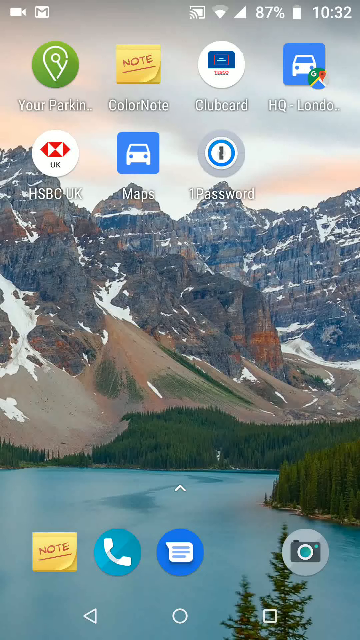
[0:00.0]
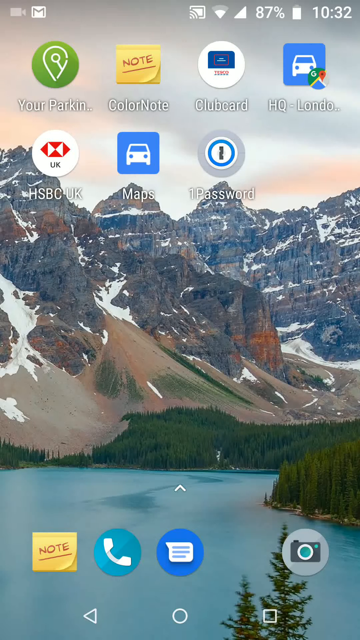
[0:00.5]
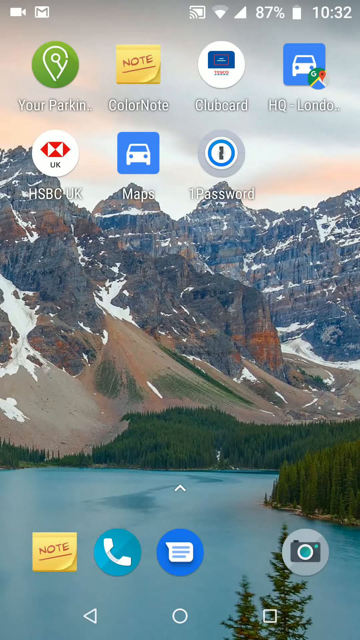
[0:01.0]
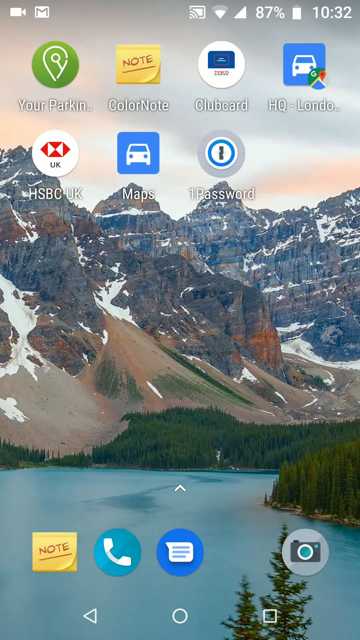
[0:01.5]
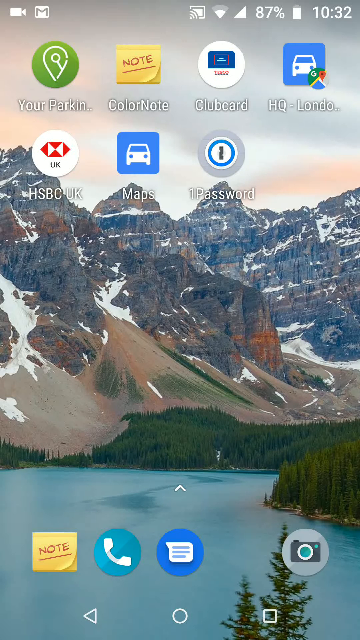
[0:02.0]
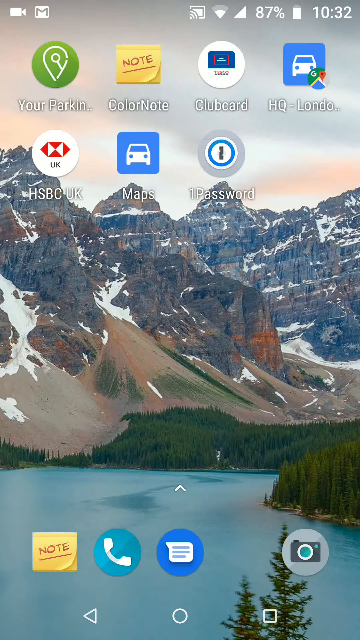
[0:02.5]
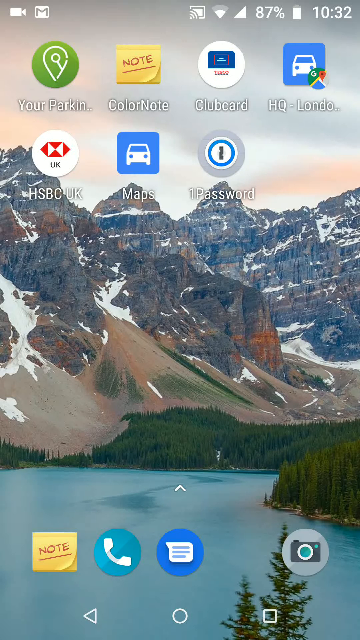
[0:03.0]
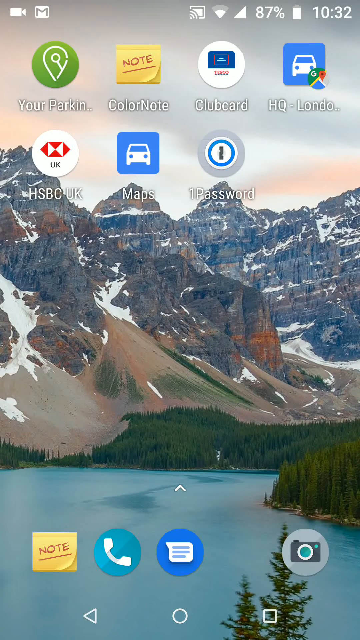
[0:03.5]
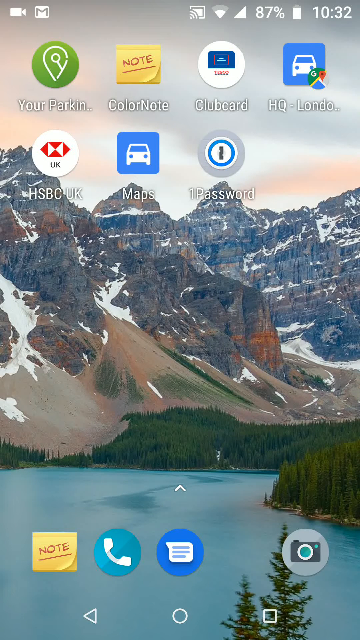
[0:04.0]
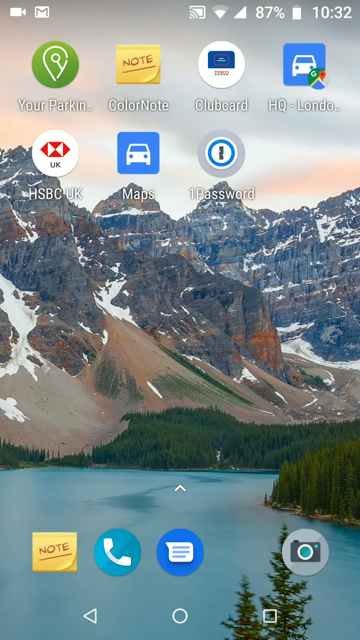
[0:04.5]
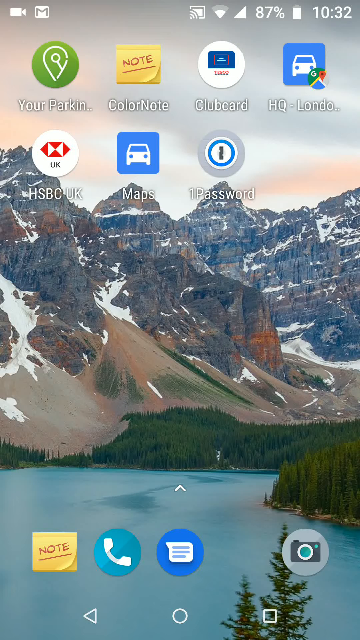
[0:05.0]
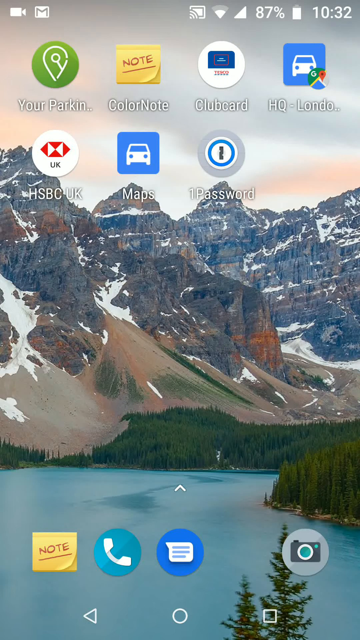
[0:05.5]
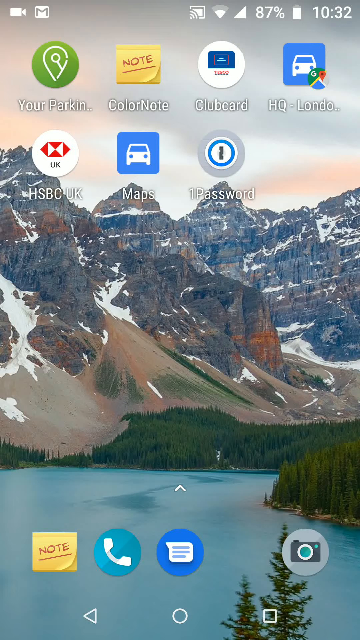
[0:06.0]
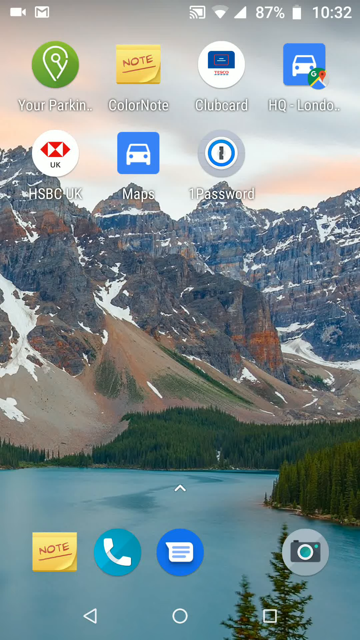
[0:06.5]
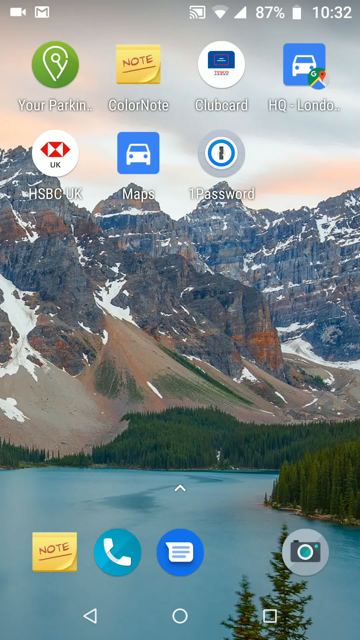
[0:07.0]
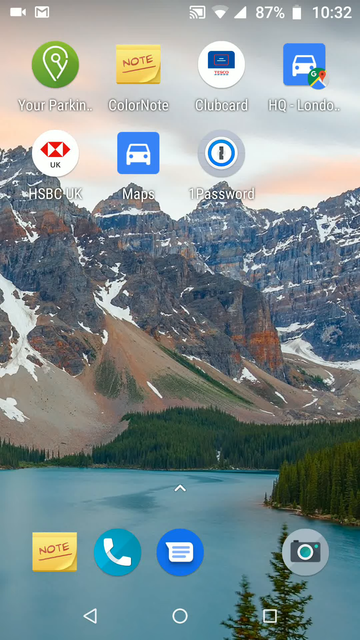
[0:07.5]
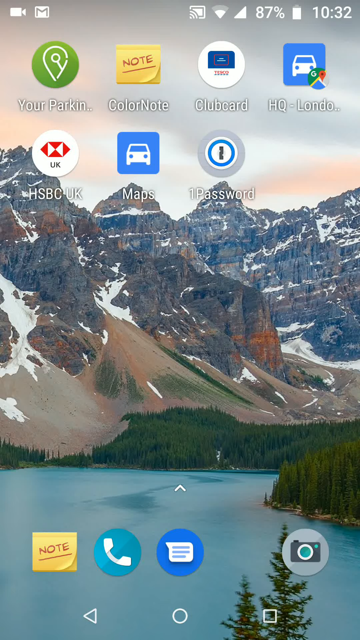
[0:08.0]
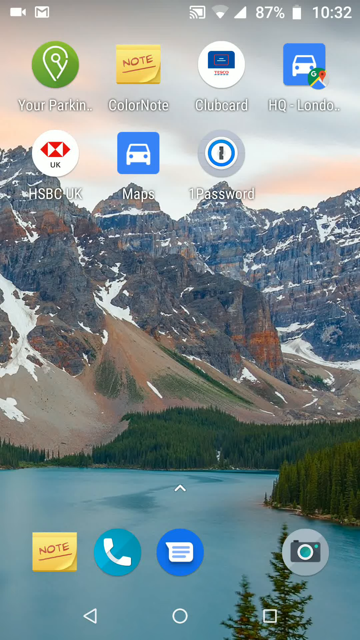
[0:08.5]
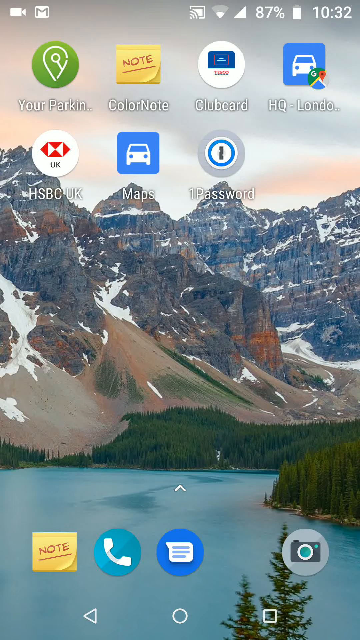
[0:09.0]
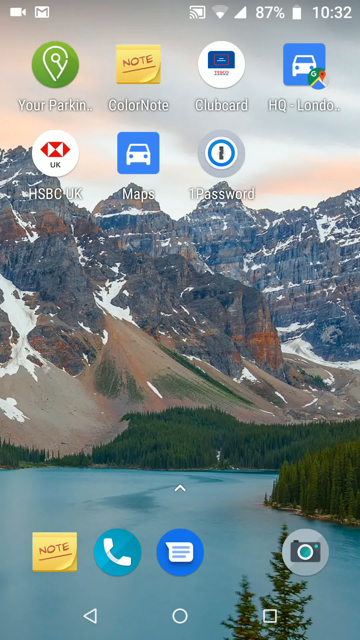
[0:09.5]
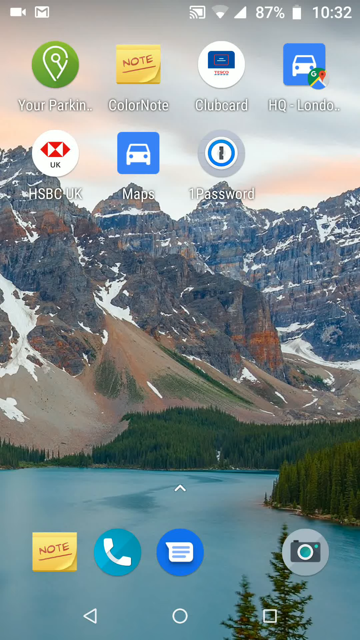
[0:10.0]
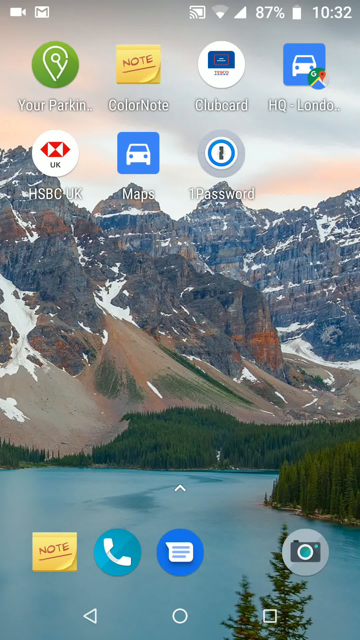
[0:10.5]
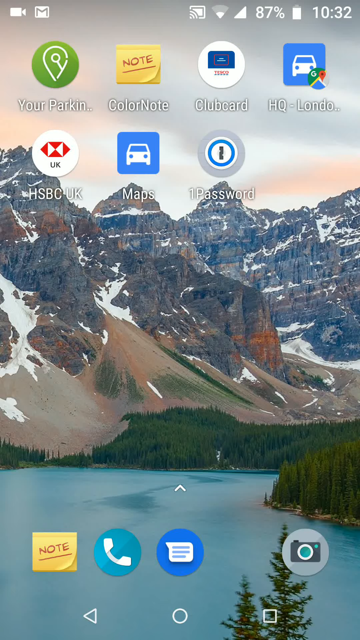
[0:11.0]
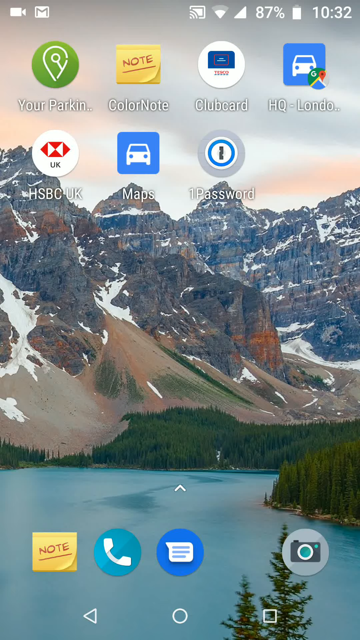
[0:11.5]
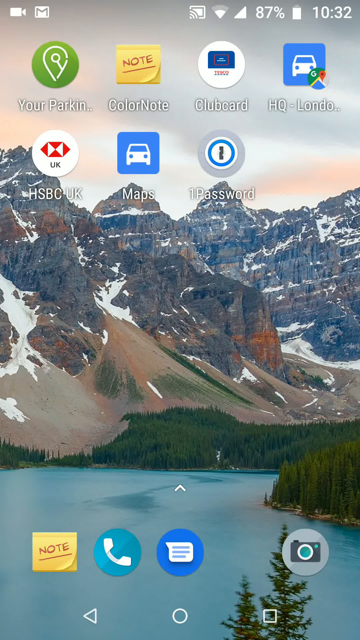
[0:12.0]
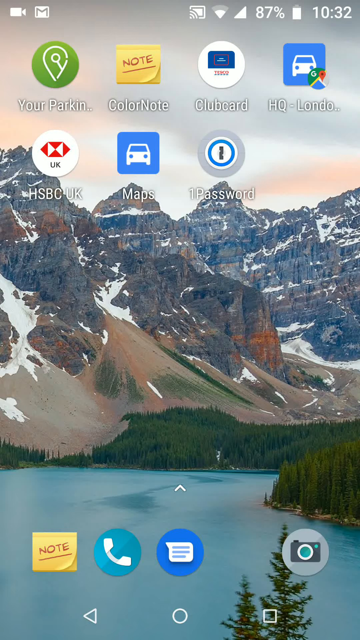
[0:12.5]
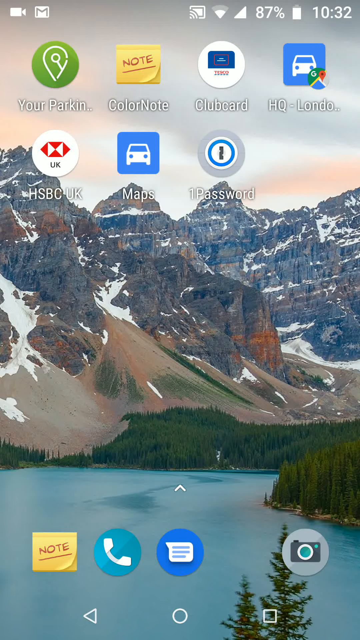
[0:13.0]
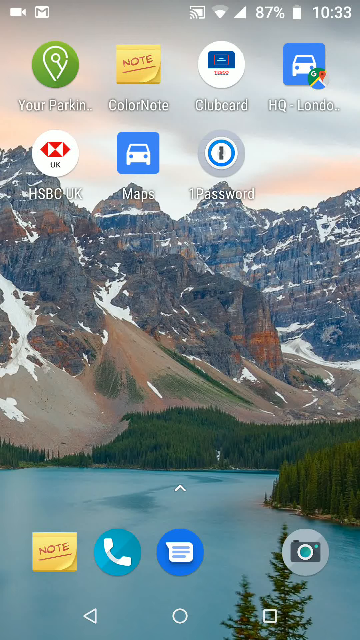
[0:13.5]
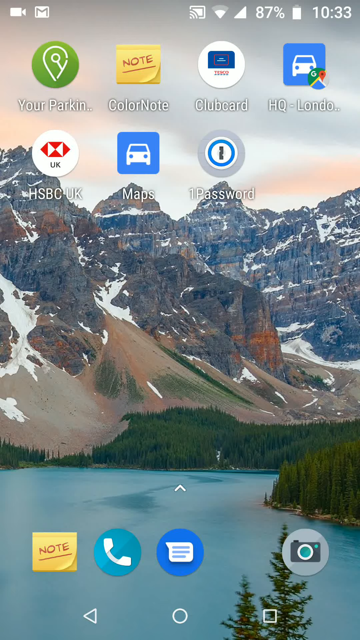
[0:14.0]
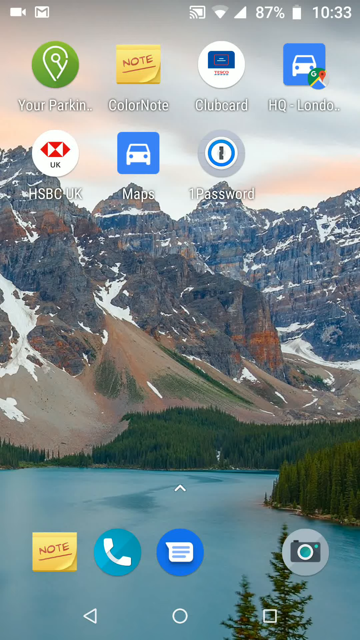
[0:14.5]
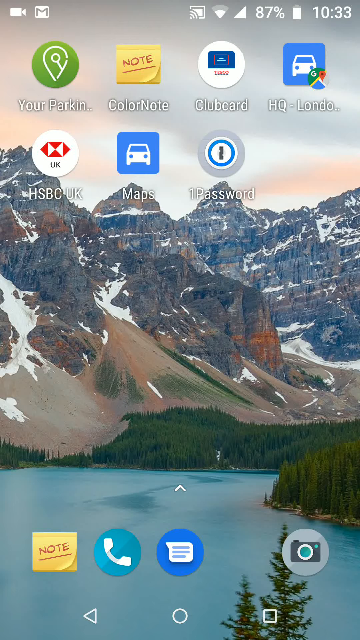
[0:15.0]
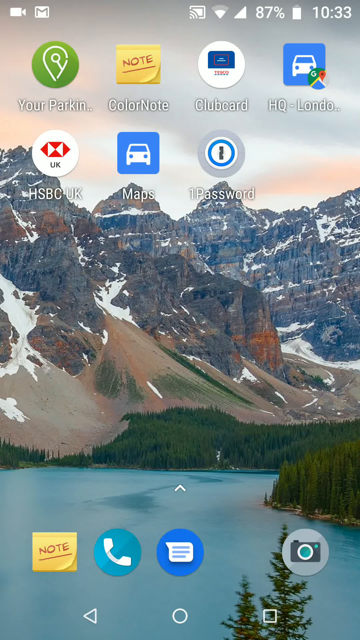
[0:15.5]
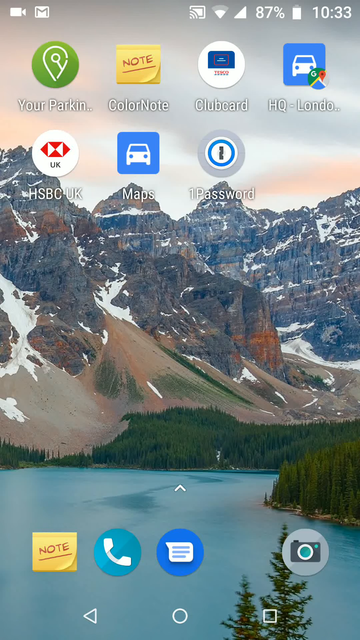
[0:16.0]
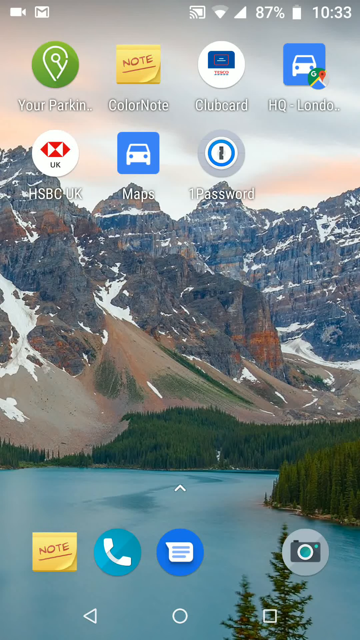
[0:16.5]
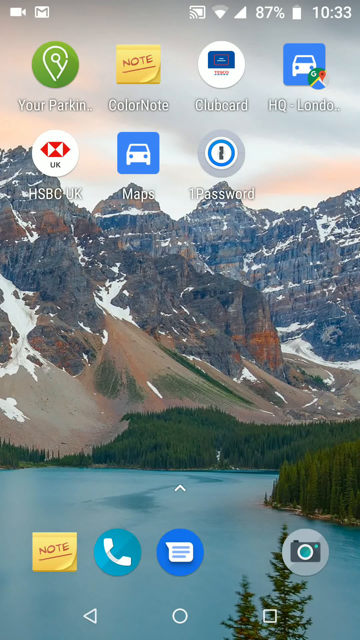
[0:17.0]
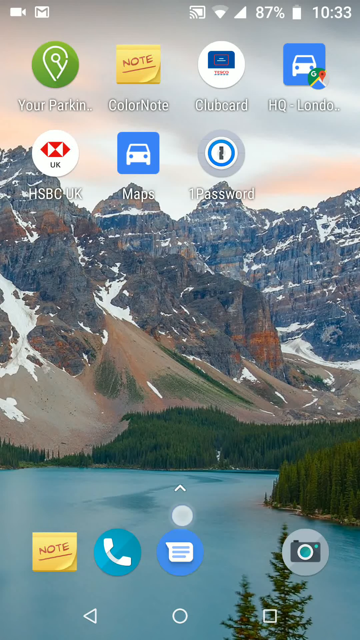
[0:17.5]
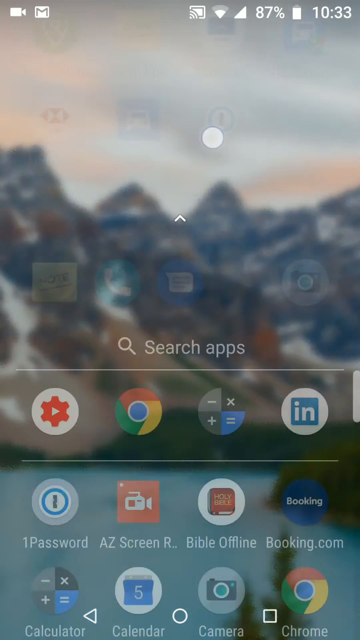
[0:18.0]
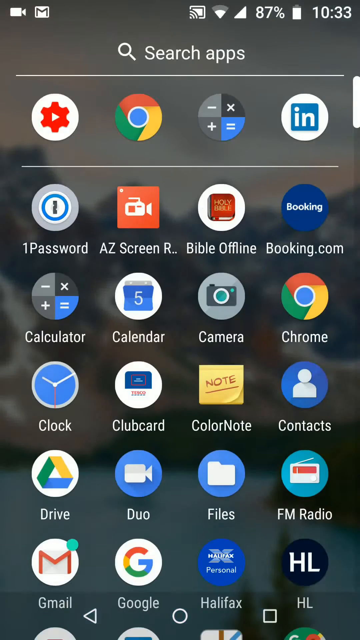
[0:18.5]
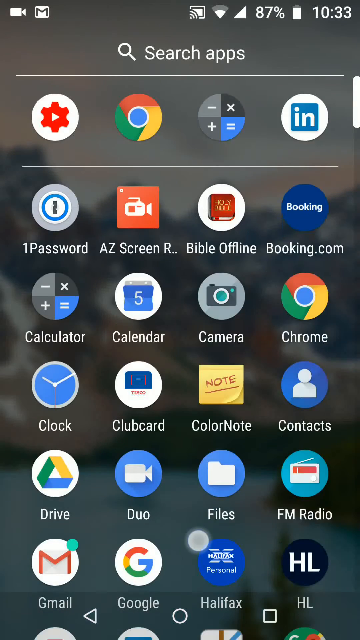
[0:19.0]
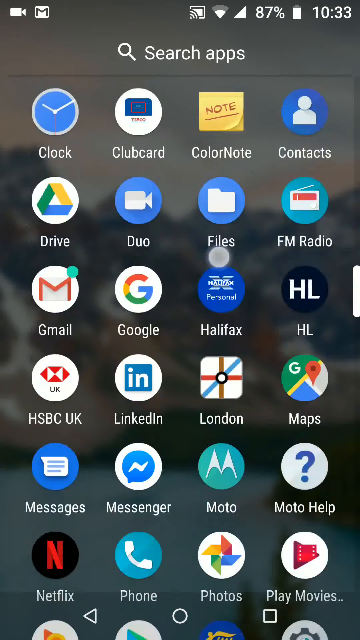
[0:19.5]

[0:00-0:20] The video is a screen recording of an Android phone, opening on the home screen. The wallpaper shows mountains, some of them with snow, what seems to be a lake, and pine trees. This first home screen has only seven or eight icons. The user slides up to reveal the rest of the apps on the phone, then scrolls down, searching for a specific app that is not yet visible. The video pauses briefly while the user is scrolling.